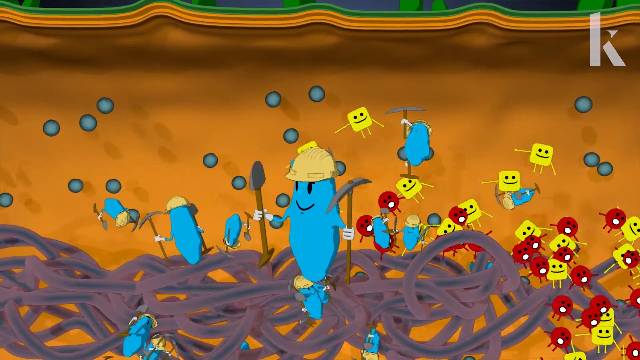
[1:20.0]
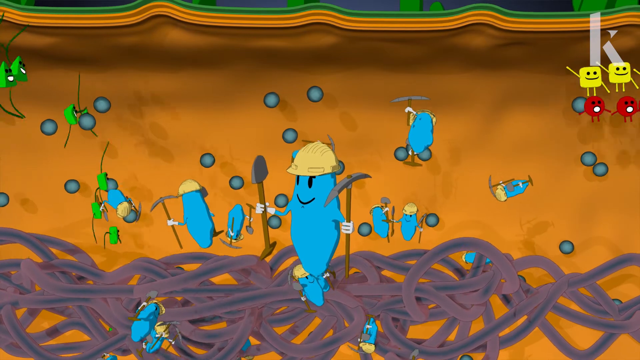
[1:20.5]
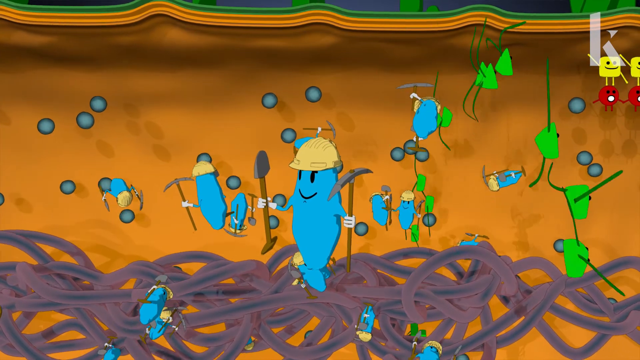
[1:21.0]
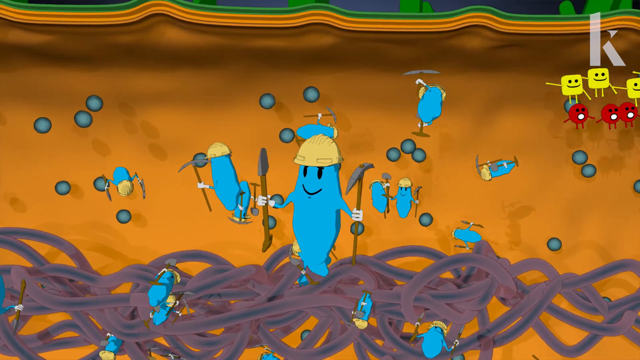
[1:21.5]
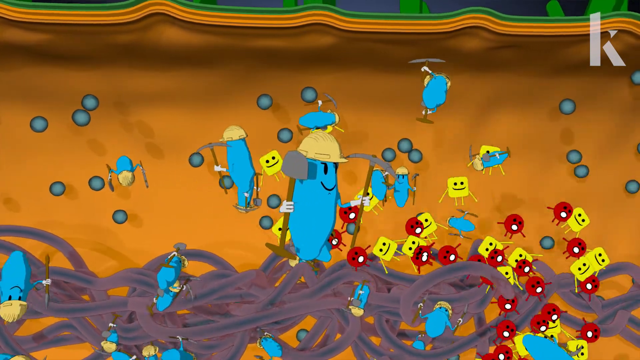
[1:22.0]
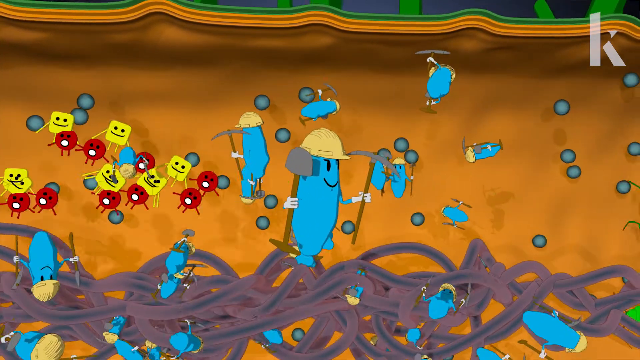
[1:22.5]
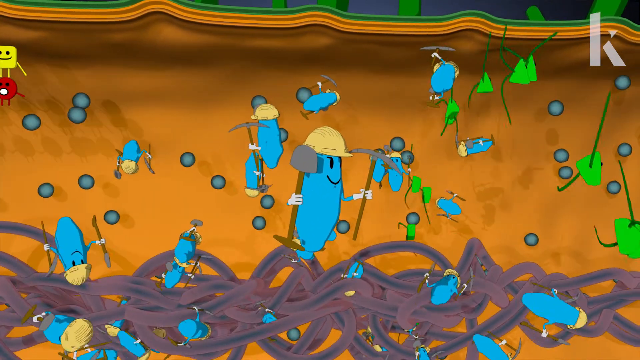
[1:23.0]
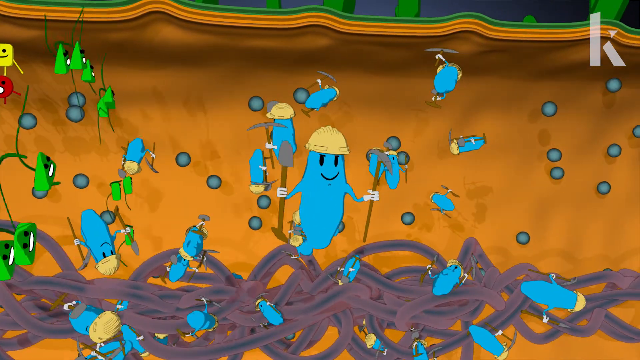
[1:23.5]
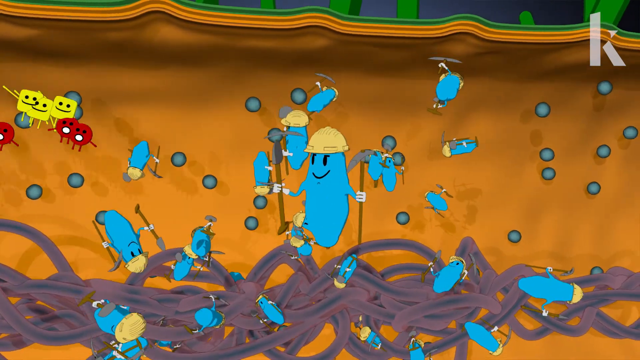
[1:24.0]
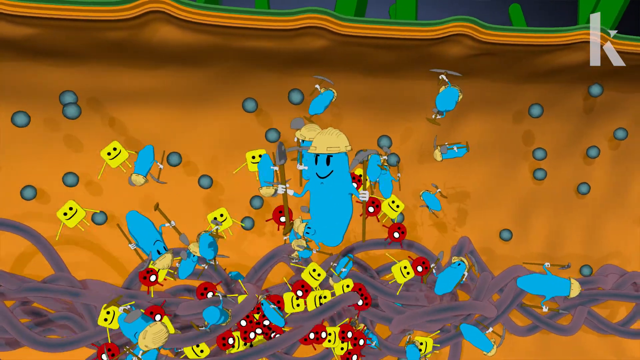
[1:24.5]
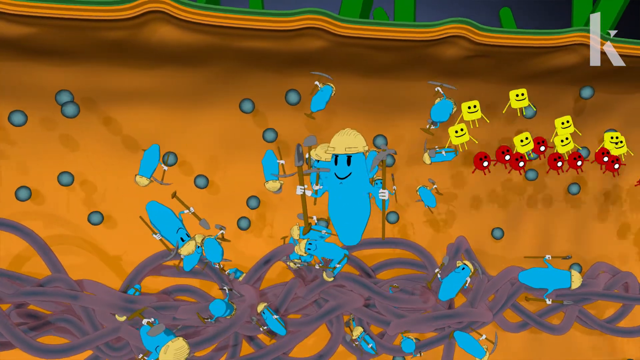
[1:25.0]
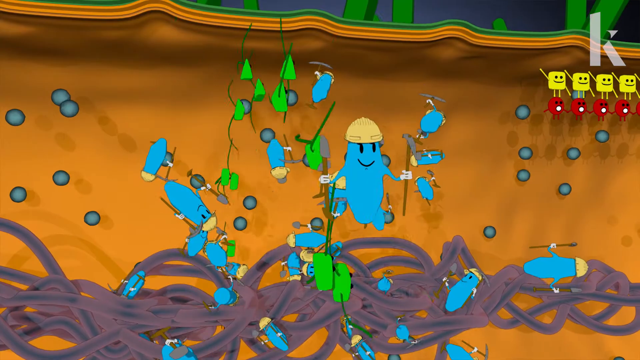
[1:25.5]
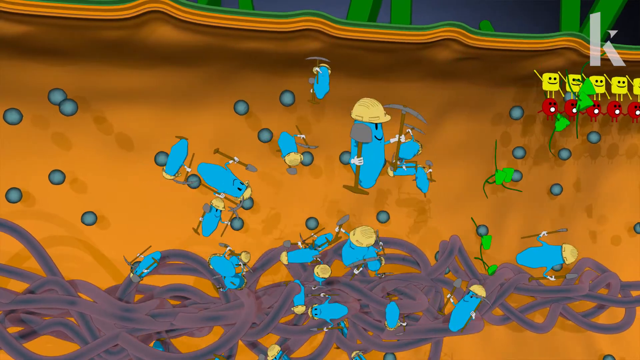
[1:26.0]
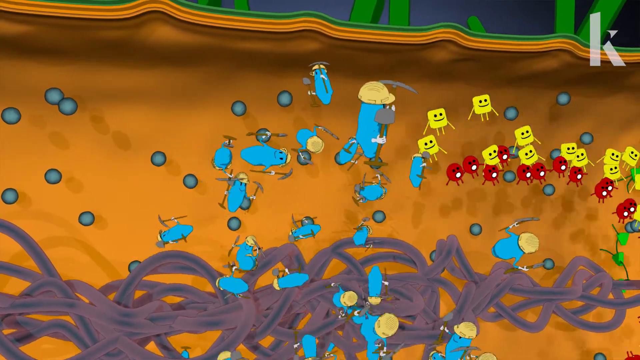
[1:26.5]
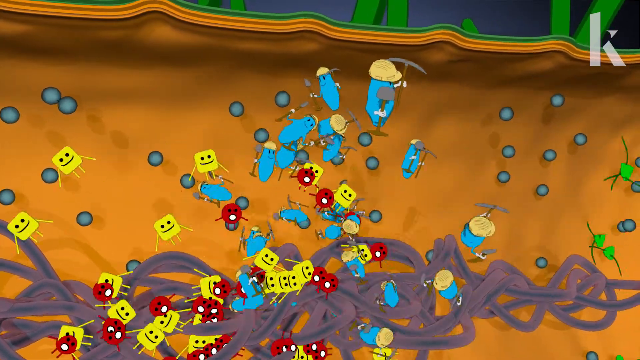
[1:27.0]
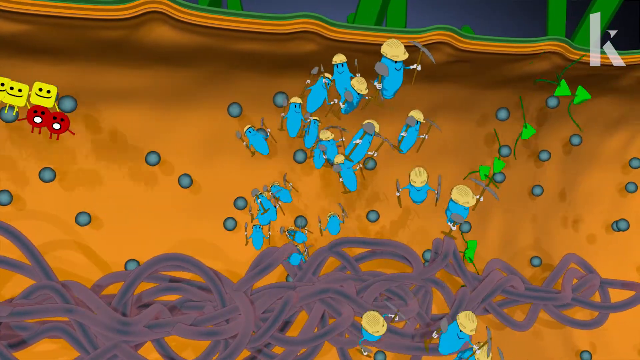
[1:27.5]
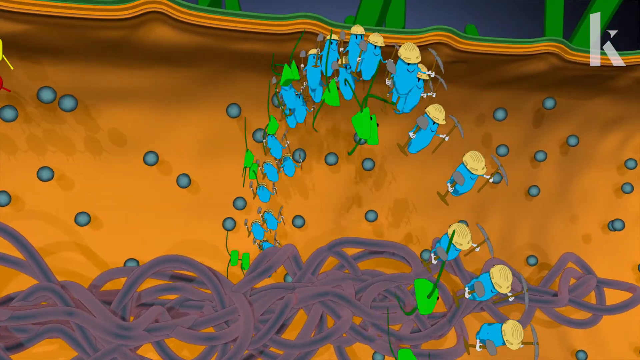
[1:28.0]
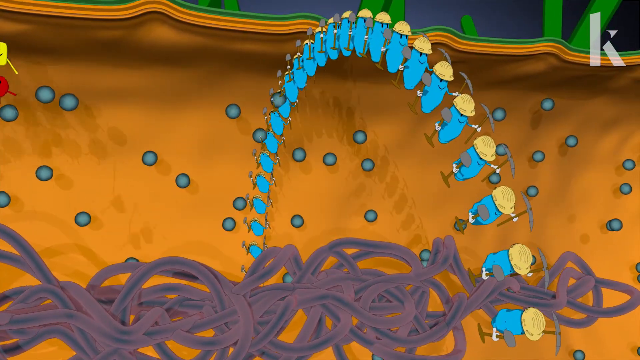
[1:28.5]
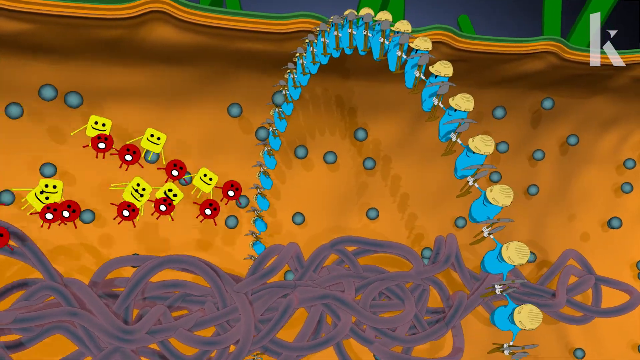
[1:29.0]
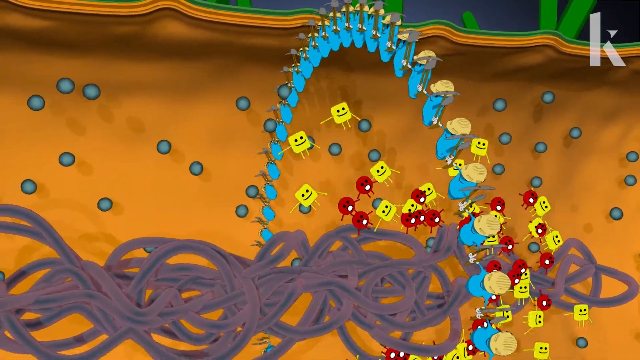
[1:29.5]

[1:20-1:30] The long blue animations look almost like water bottles. They form into an oval or circle inside the bacterium. At the same time, the green triangle-shaped objects chase the red and yellow objects left to right and right to left, back and forth, while the blue animations form a circle inside the bacterium. The setting is unchanged: the inside of the bacterium, all animated. The cell walls inside the bacterium are orange, and the outside of the bacterium is green. Inside there is also a squiggly shape that looks like a tangled mess of rope, colored purple/brown, brown/blue.